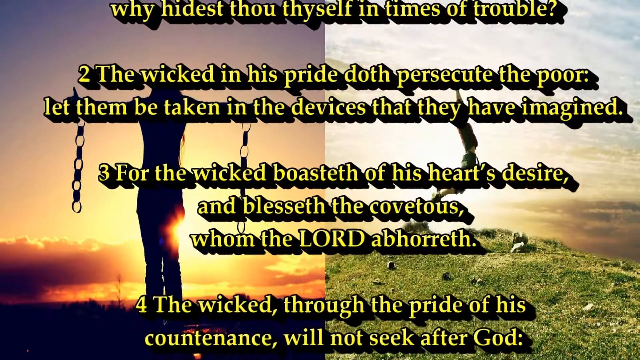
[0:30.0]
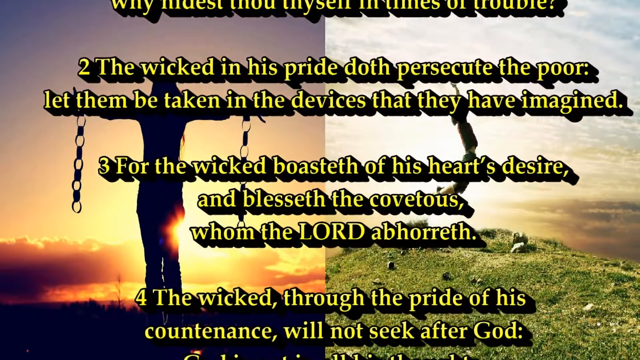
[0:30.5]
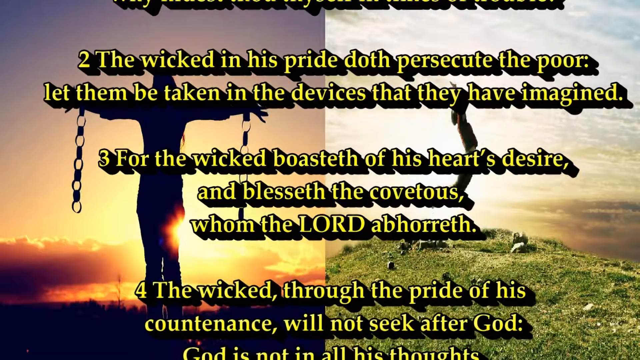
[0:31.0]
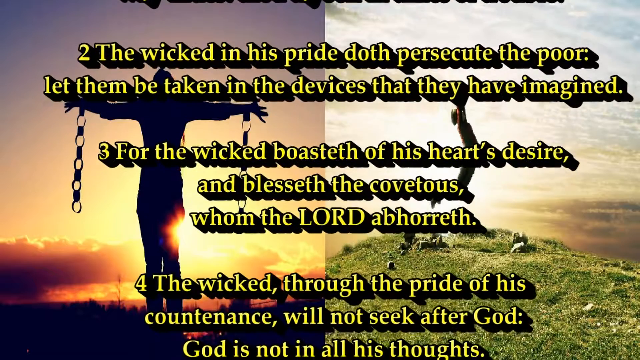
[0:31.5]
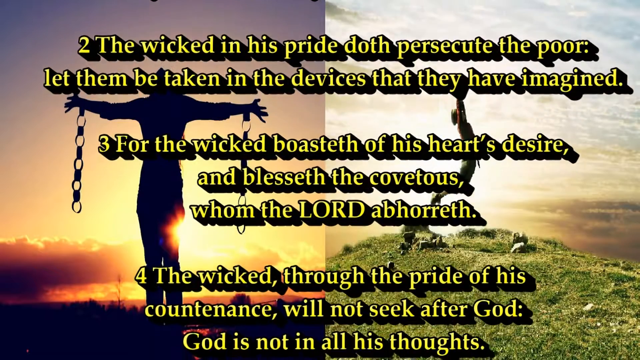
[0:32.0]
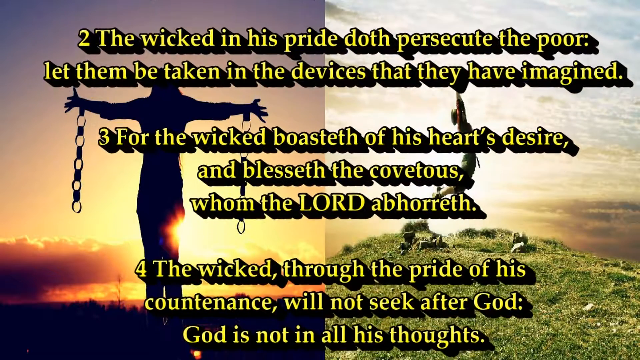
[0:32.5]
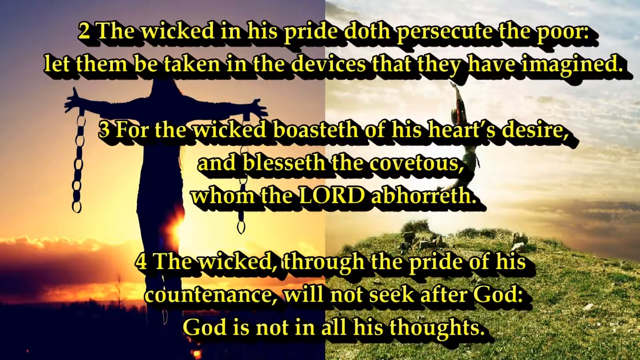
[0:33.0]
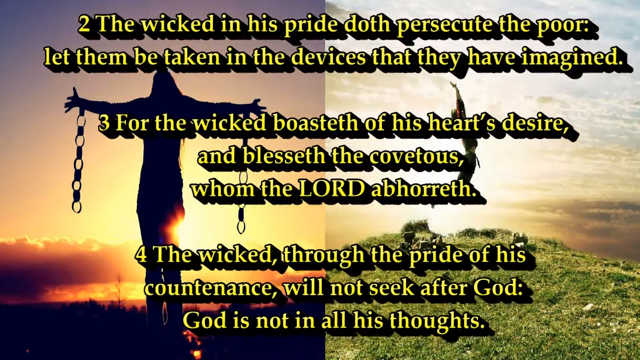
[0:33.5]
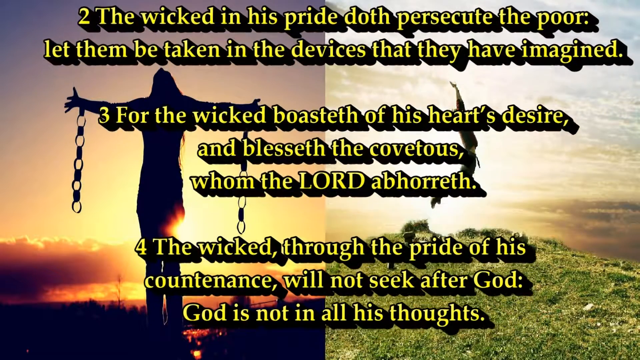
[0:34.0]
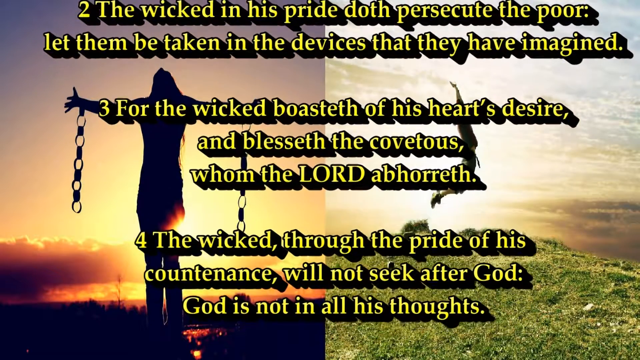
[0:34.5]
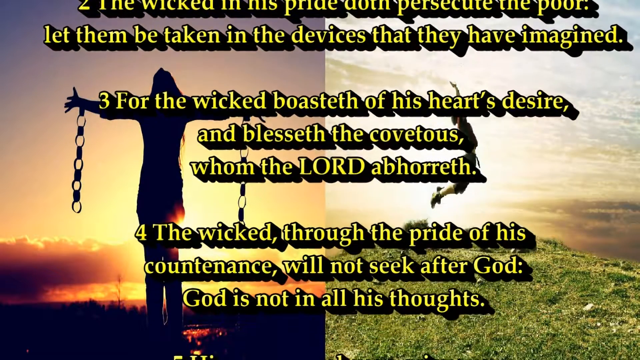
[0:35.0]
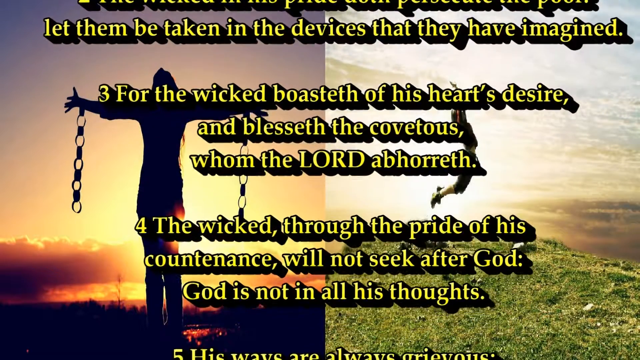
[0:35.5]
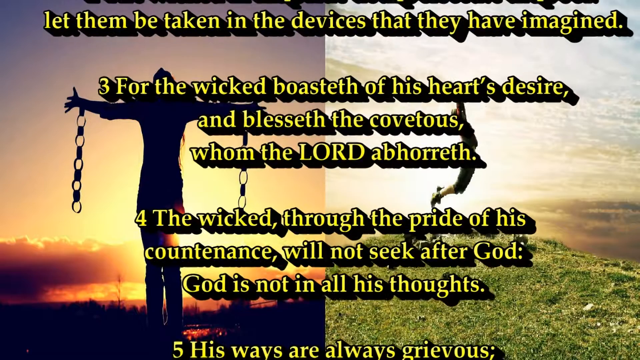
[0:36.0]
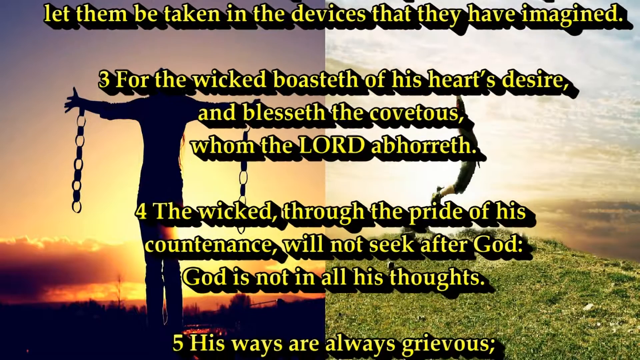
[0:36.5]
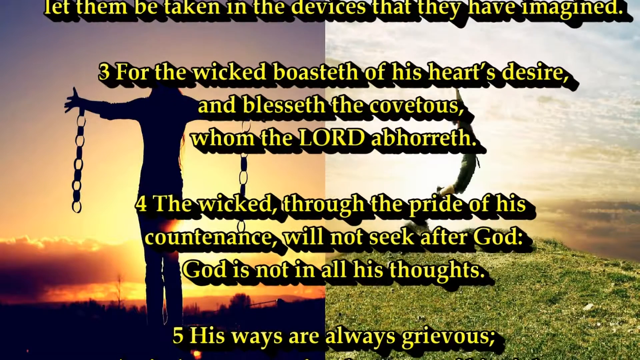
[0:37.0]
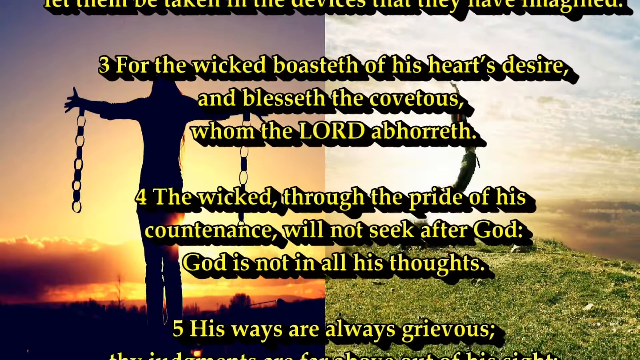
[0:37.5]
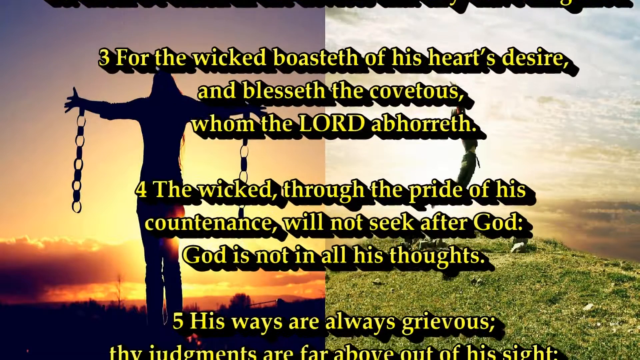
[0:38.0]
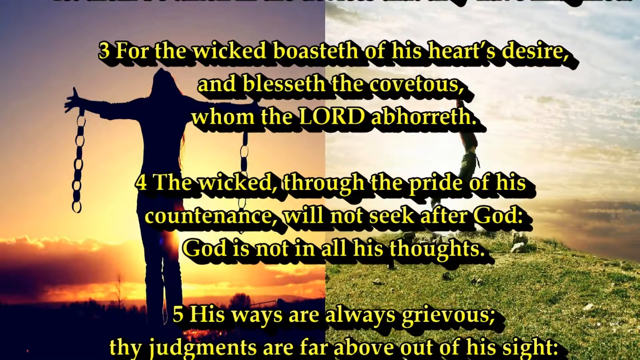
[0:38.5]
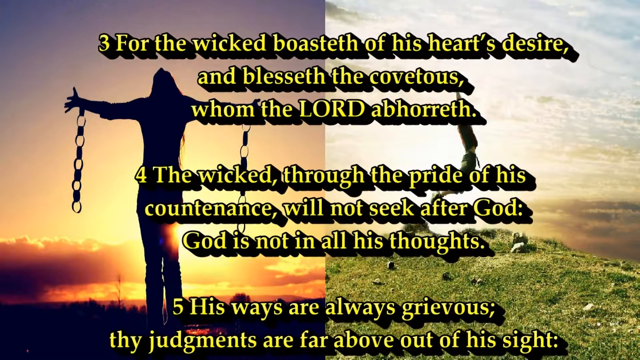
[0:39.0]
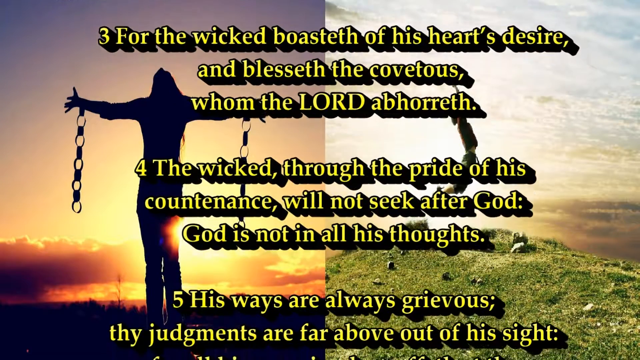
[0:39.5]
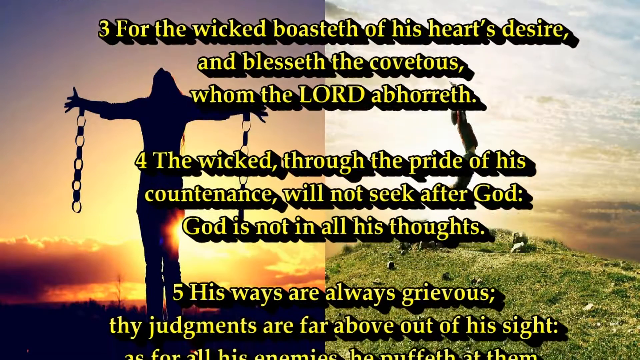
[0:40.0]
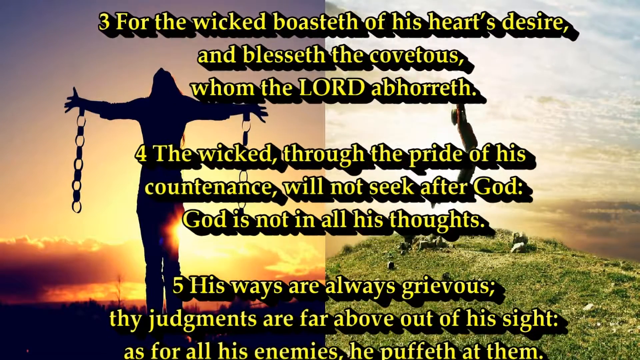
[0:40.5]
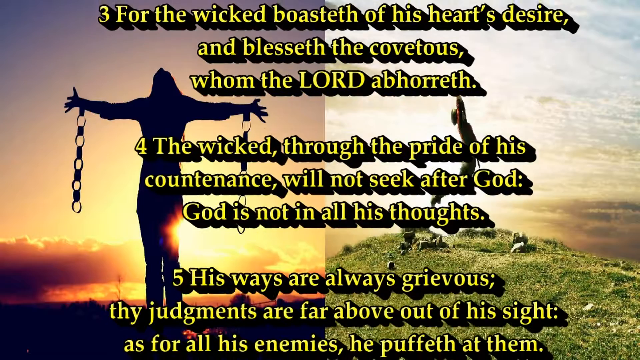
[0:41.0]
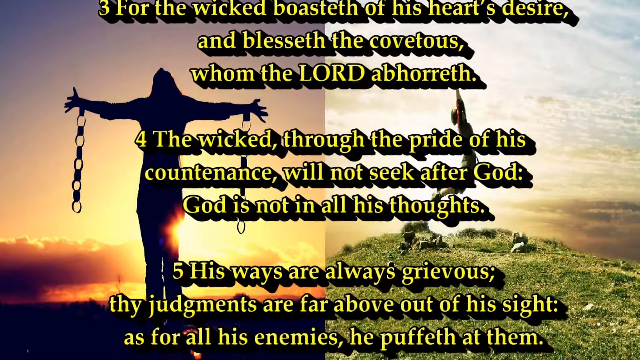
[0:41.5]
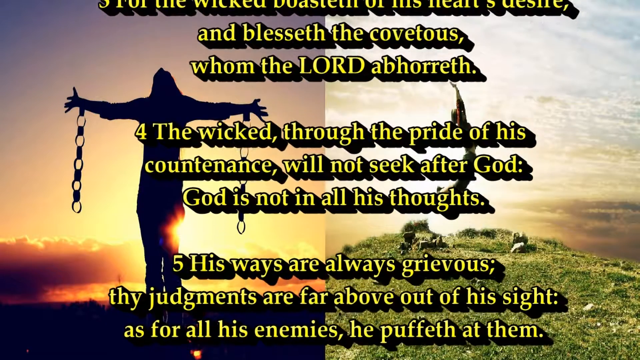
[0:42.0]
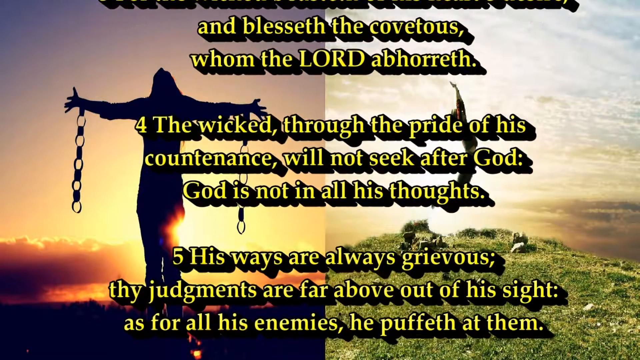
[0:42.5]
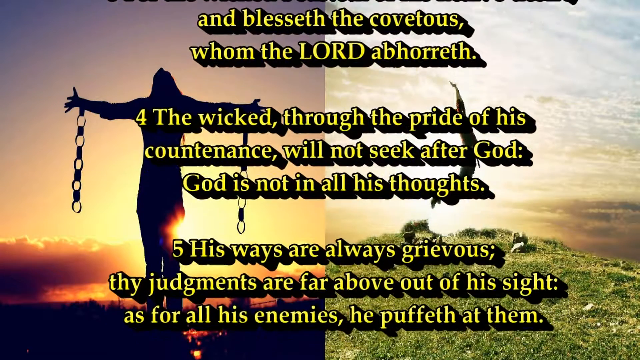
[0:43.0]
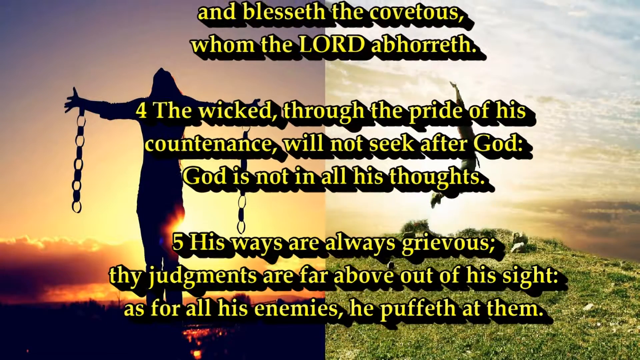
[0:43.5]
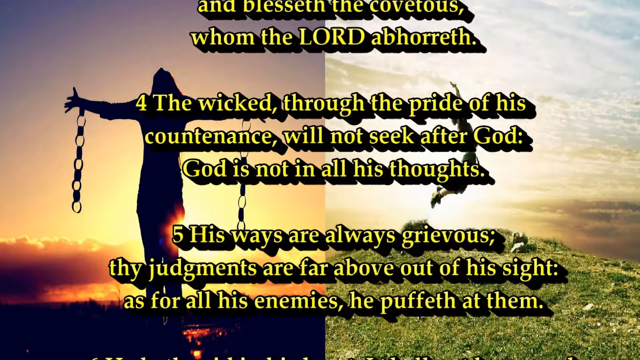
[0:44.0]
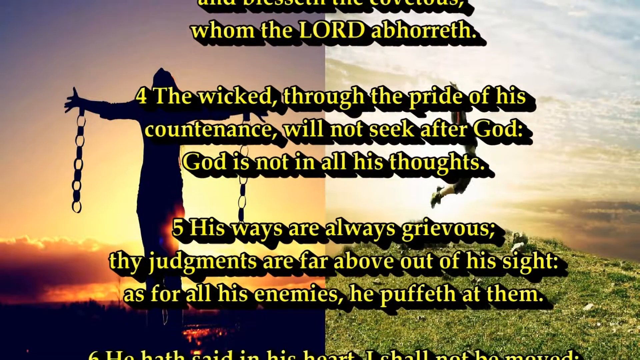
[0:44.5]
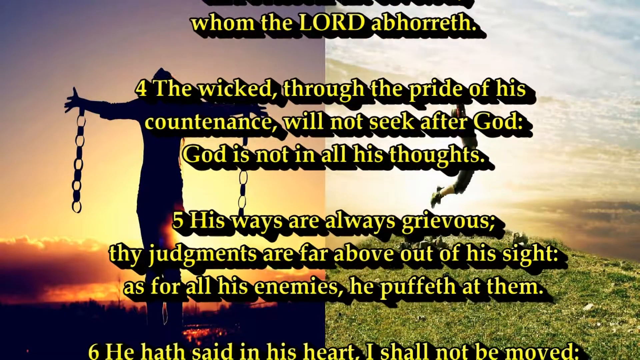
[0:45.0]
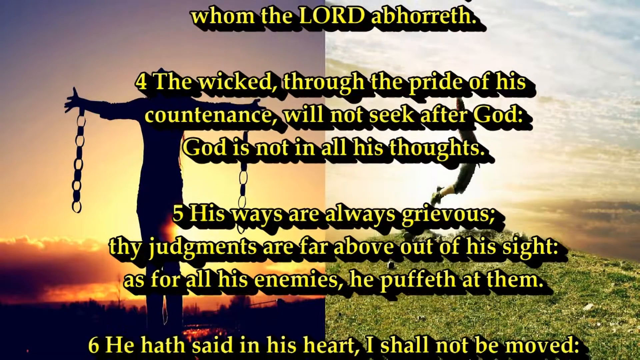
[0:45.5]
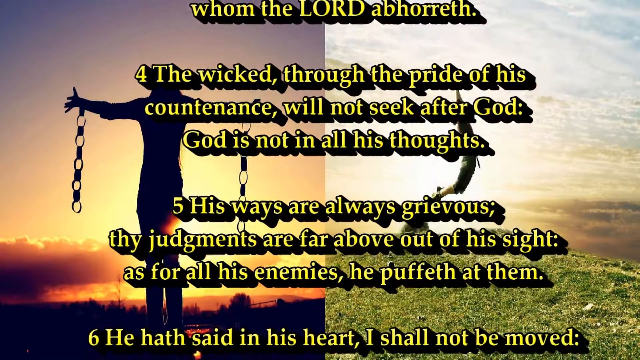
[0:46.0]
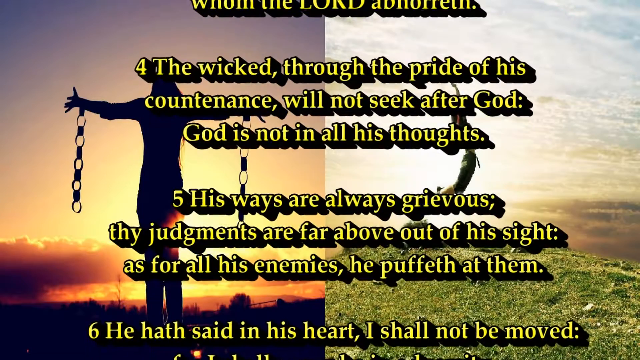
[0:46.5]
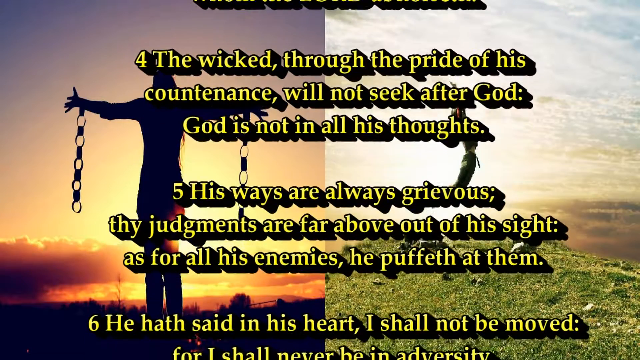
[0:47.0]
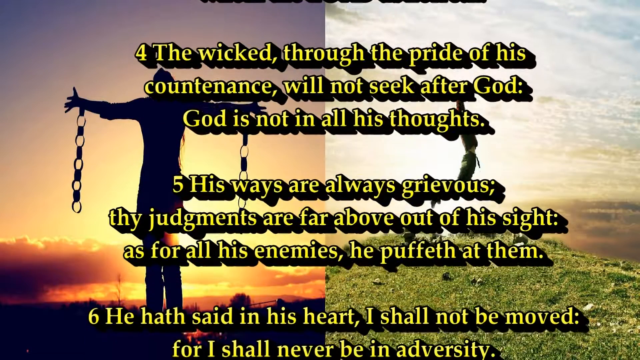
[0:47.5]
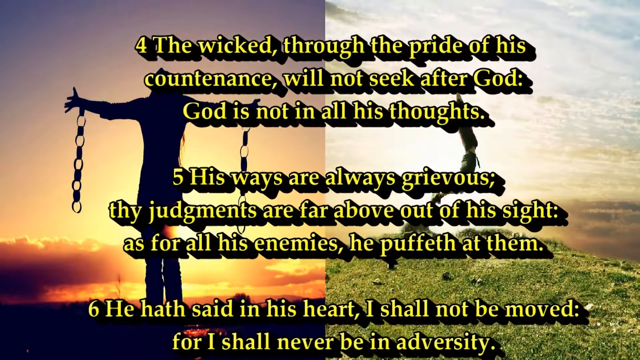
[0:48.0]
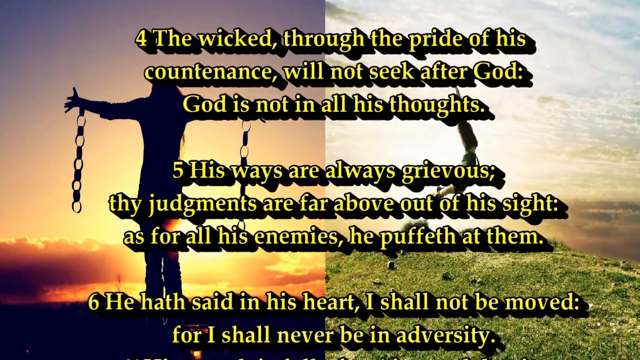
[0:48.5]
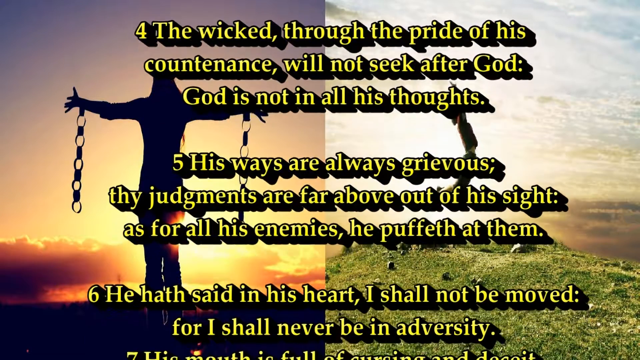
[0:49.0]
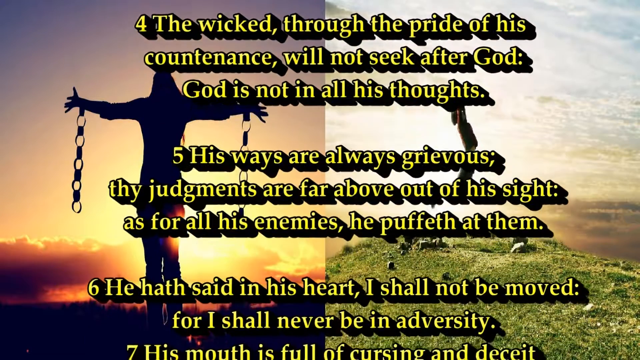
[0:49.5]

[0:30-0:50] The verses of the psalm are visible: verse 1 with two lines, verse 2 with two lines, verse 3 with three lines, verse 4 also with three lines, verse 5 with five lines, and verse 6 with three lines. They are written in black and yellow. Verse 2 reads "the wicked in his pride does persecute the poor, let them be taken in the devices that they have imagined." Verse 3 begins "For the wicked." Verse 4 reads "the wicked through the pride of his countenance will not seek after God." The text continues on to the further verses.